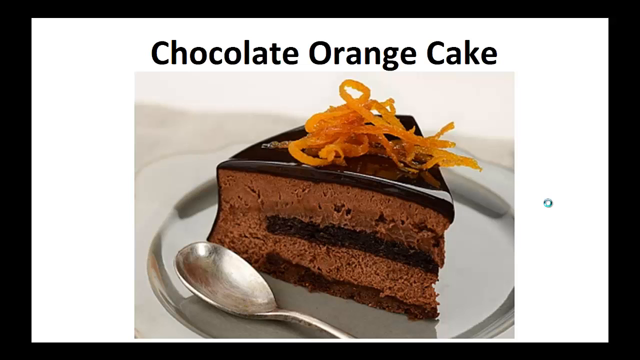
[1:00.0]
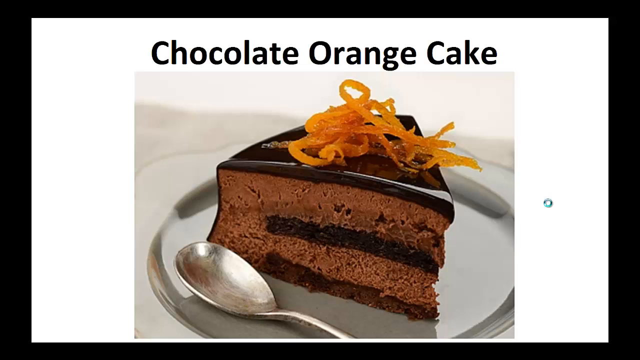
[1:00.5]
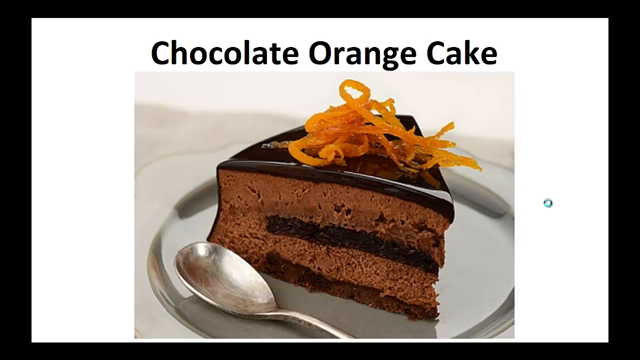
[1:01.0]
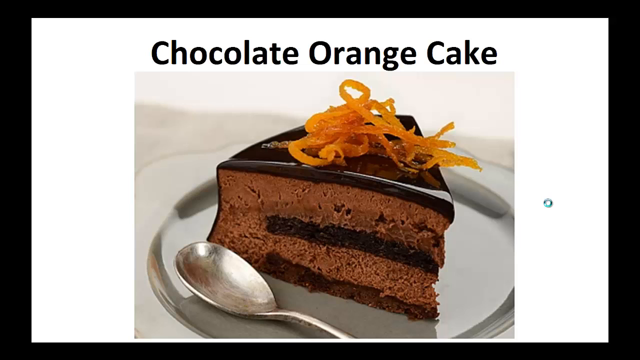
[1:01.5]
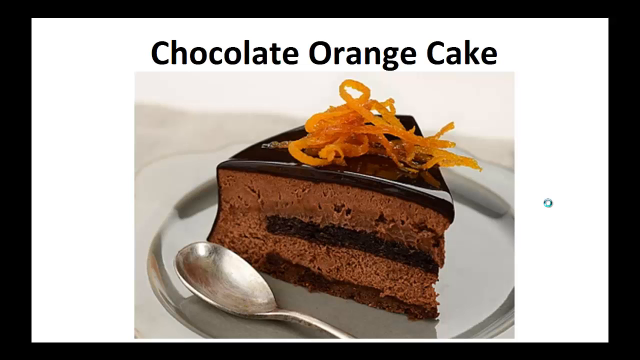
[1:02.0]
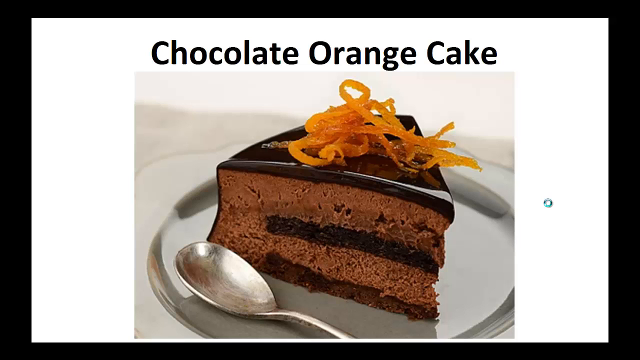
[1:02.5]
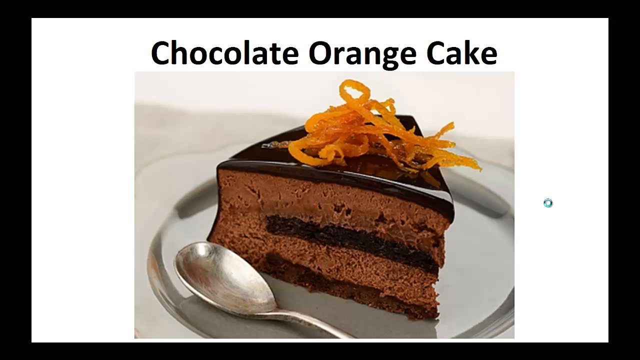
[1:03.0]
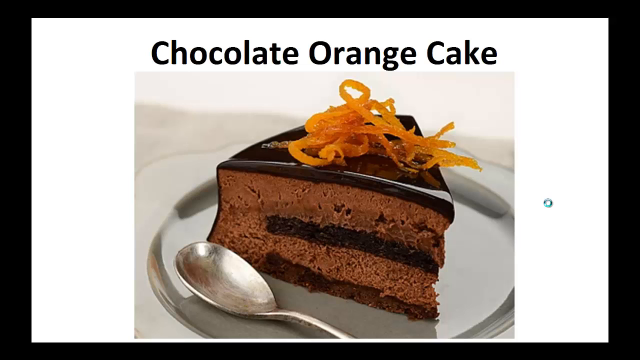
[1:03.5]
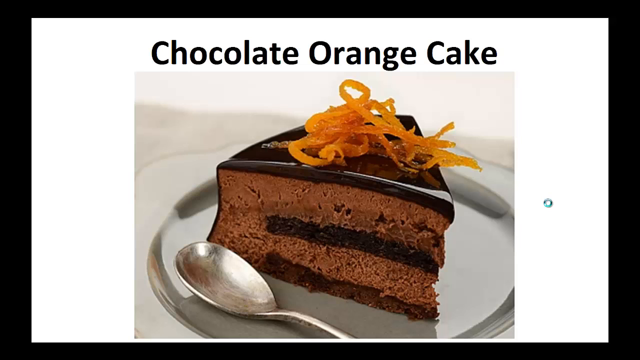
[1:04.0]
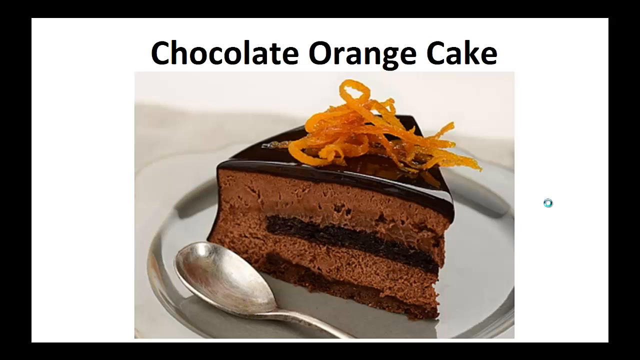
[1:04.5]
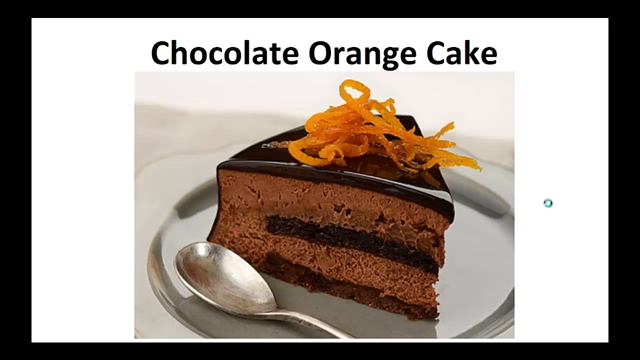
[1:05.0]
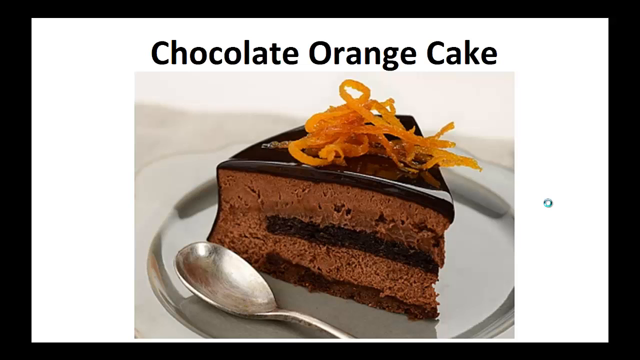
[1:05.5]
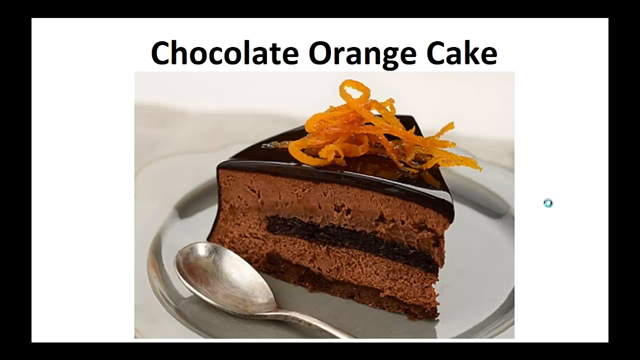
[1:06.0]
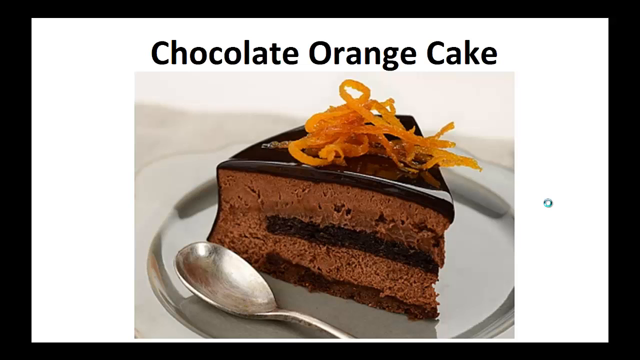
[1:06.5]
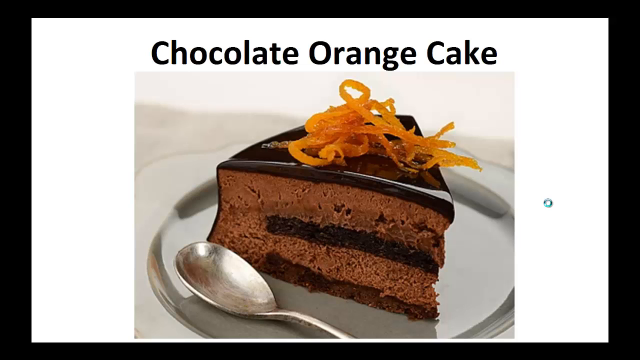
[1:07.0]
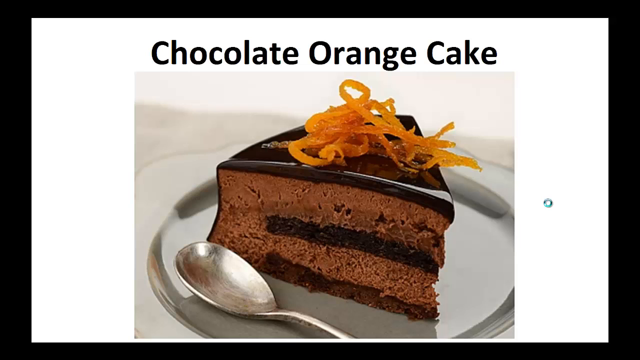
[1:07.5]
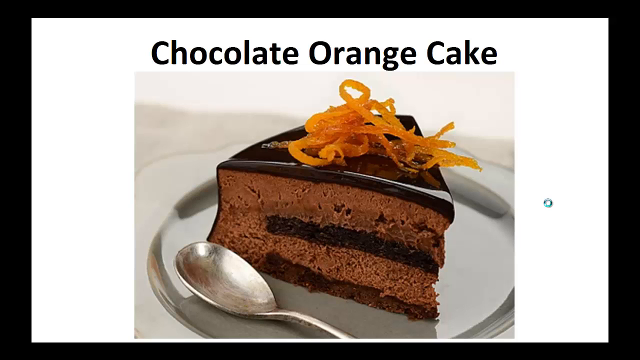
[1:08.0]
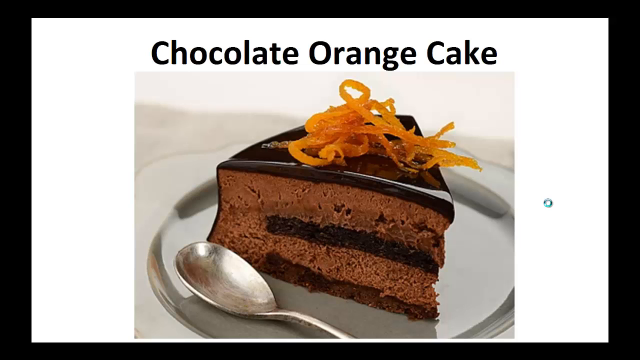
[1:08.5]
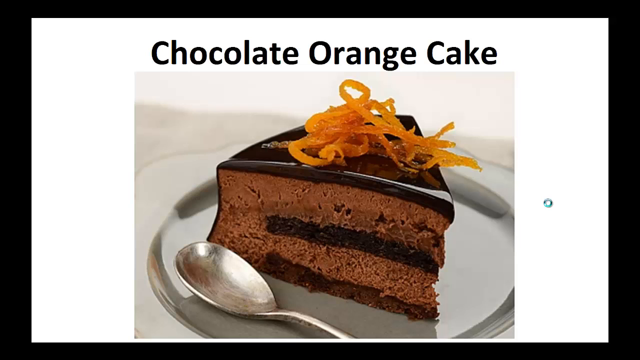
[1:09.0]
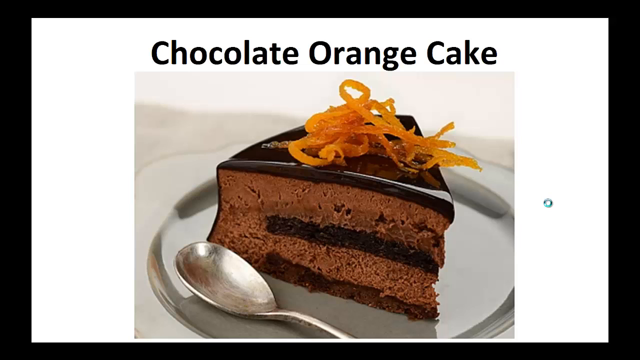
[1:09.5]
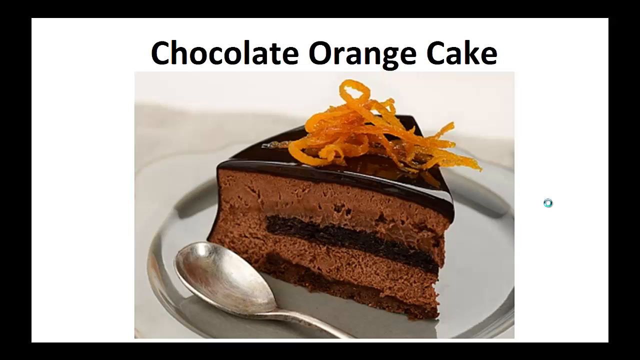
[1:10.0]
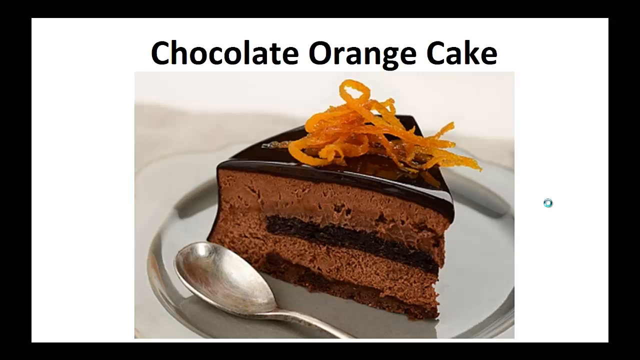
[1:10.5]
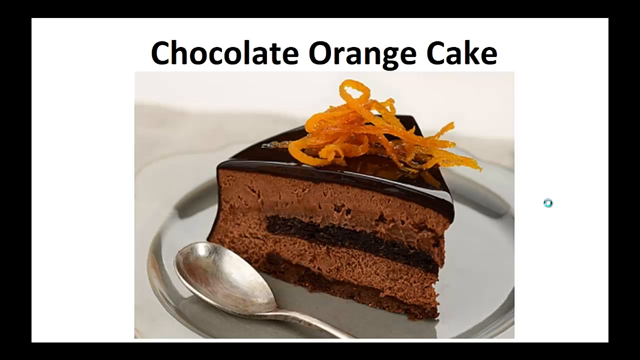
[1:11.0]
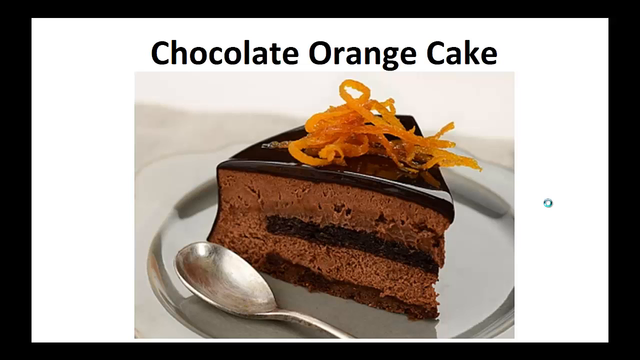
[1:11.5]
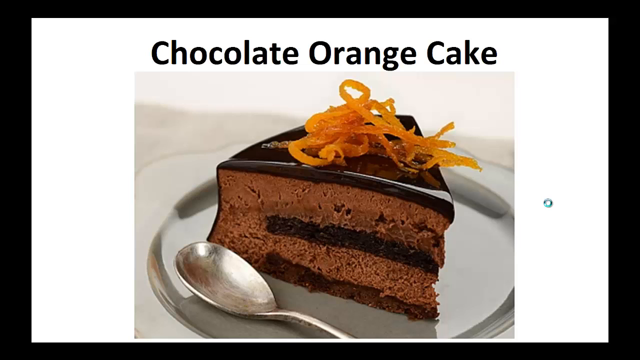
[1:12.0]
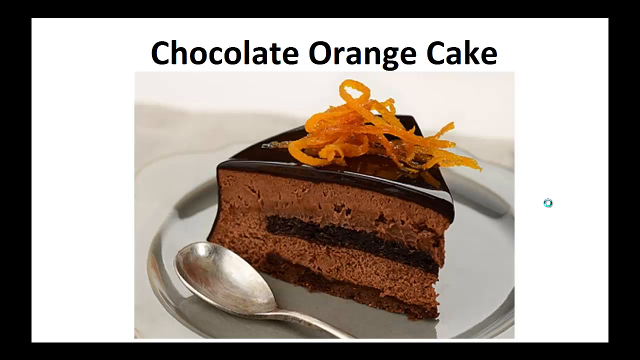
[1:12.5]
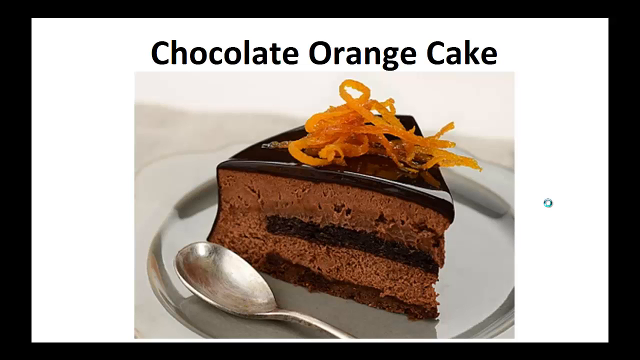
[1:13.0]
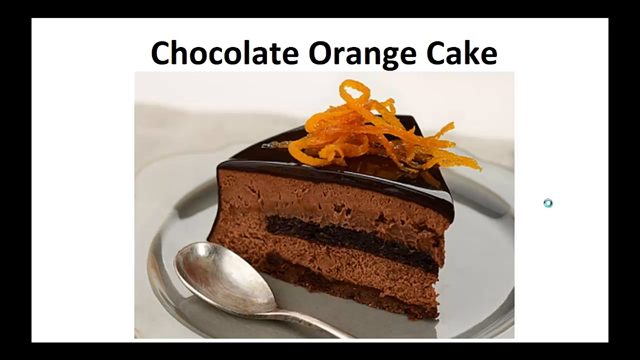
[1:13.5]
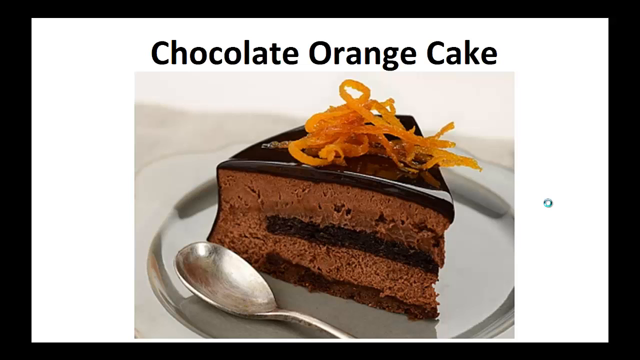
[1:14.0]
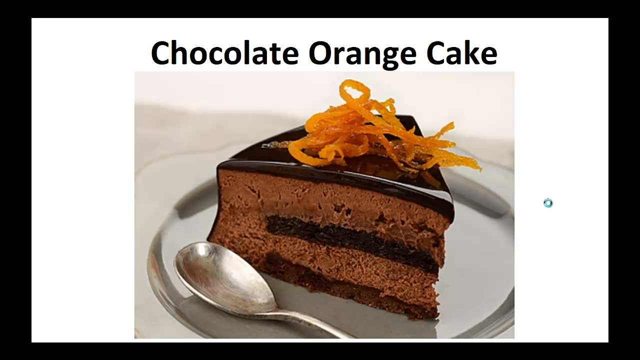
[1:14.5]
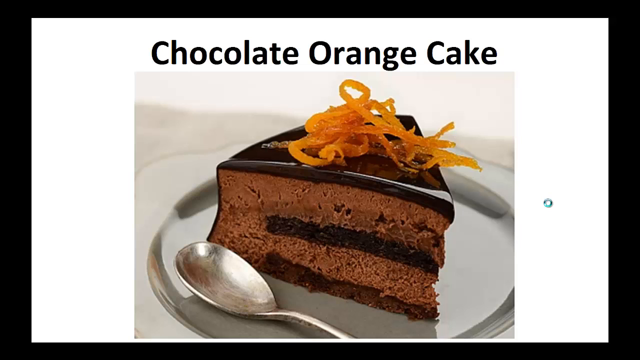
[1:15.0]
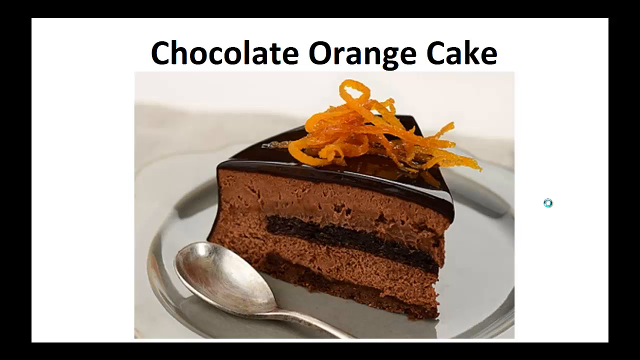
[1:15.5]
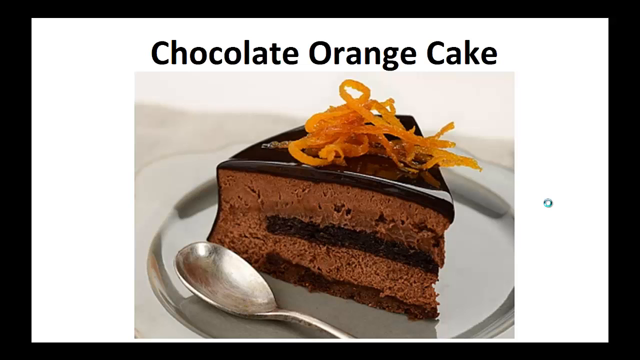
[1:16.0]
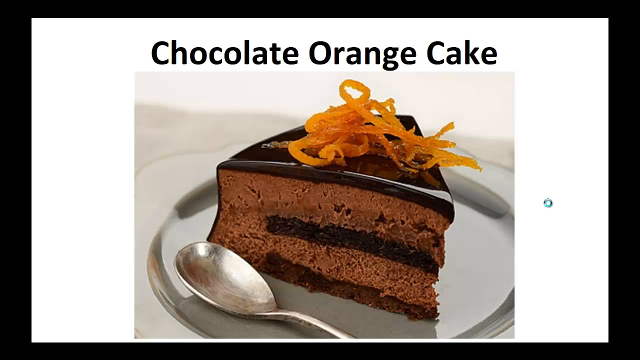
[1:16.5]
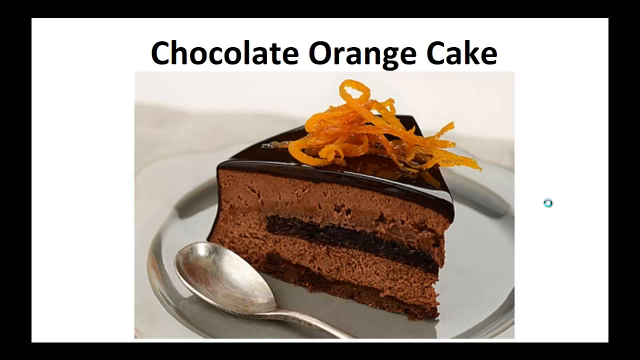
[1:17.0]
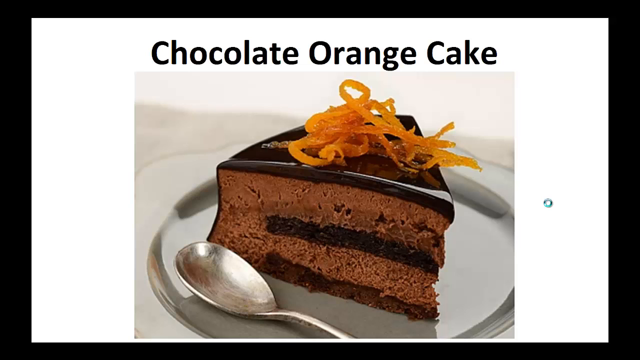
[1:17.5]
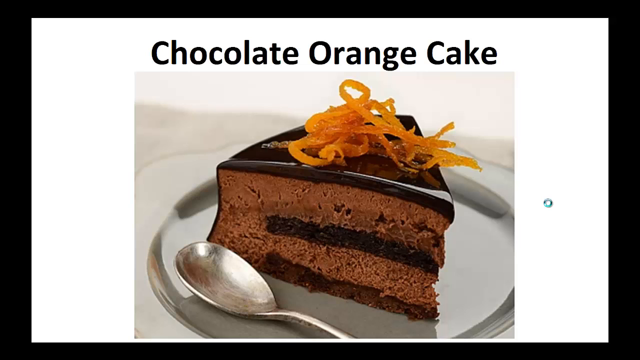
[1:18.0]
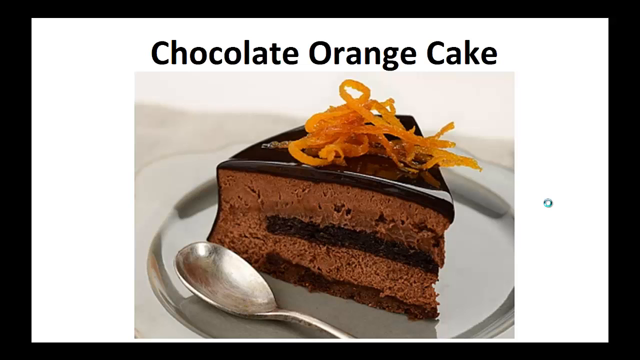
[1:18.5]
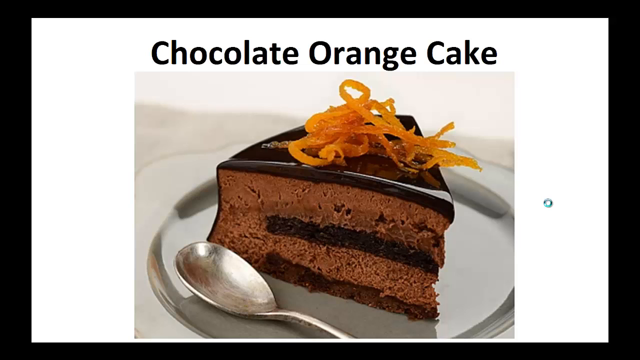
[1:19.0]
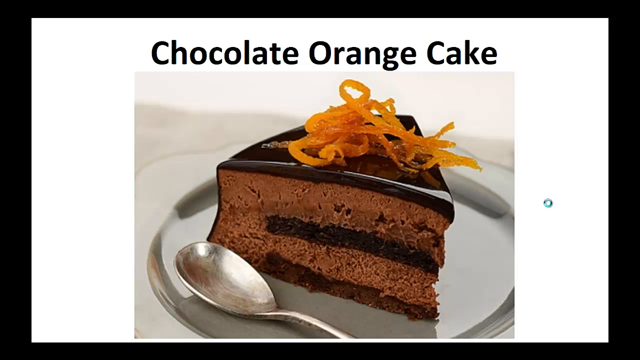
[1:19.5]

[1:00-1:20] A sliver of the candied orange peel runs away towards the back of the piece of cake, to the outer rim. The top has no real design other than the candied orange decoration. Below it is a thick, lustrous, melting chocolate icing, possibly a ganache, which is also present in a much thinner layer on the outside of the cake. Below that there appear to be alternating layers of chocolate cake and chocolate ganache.